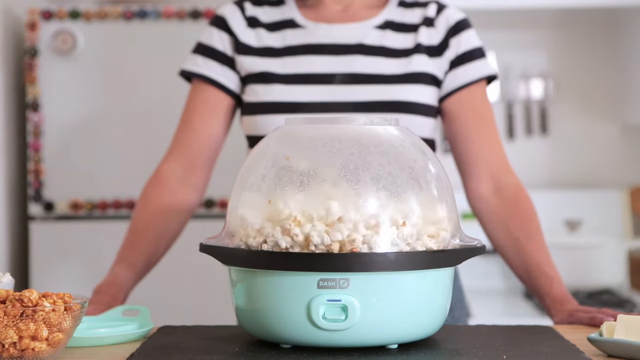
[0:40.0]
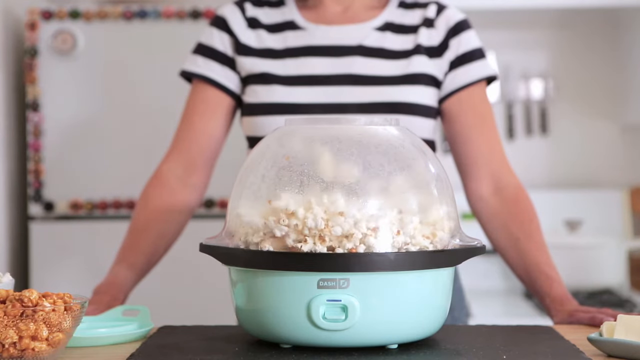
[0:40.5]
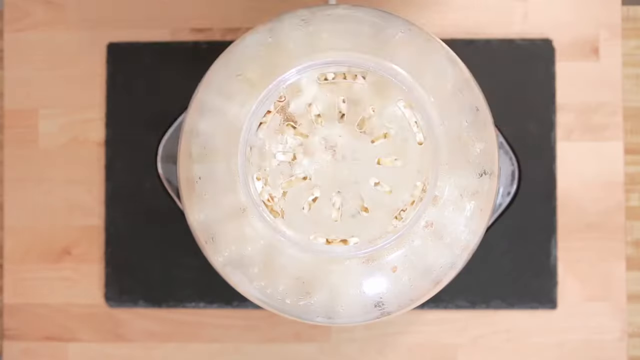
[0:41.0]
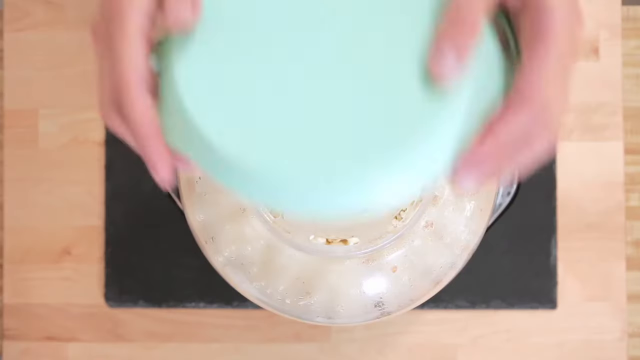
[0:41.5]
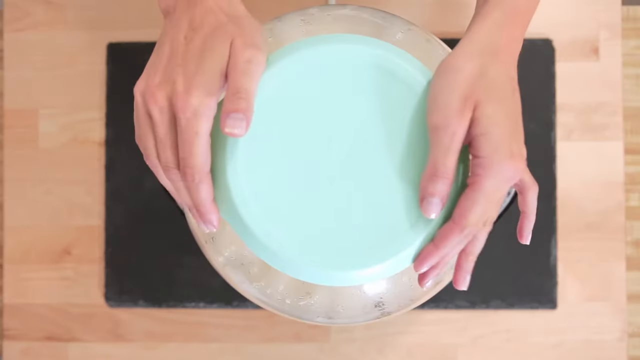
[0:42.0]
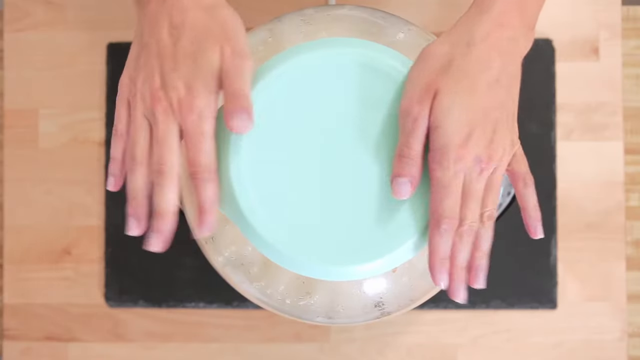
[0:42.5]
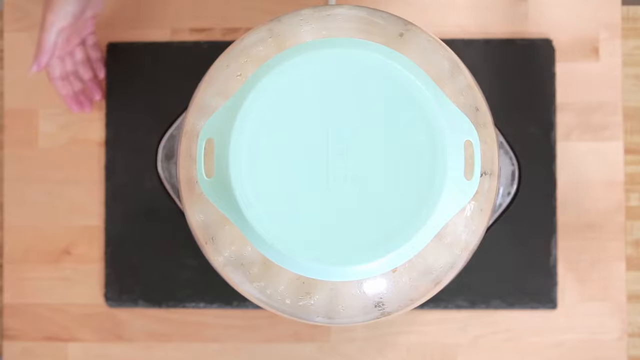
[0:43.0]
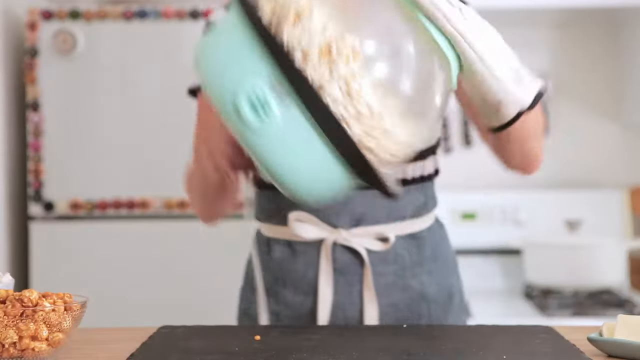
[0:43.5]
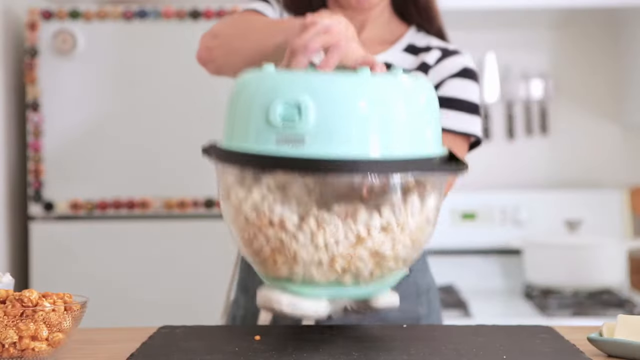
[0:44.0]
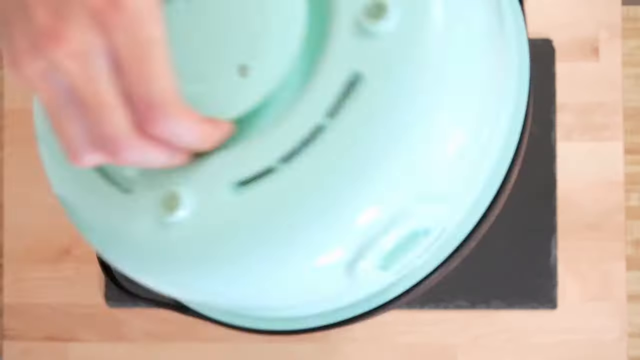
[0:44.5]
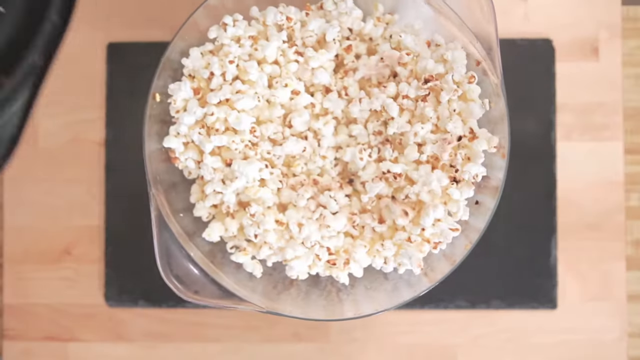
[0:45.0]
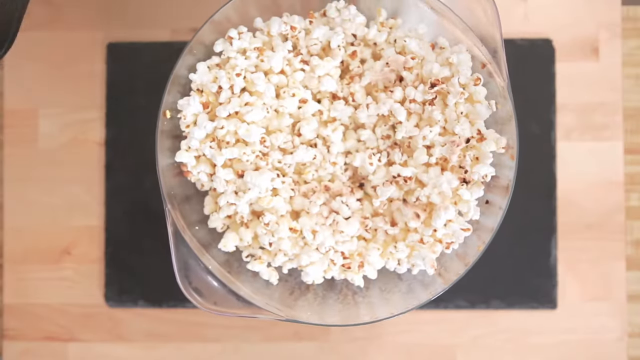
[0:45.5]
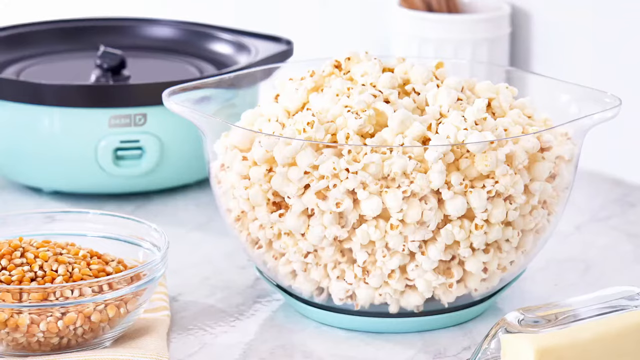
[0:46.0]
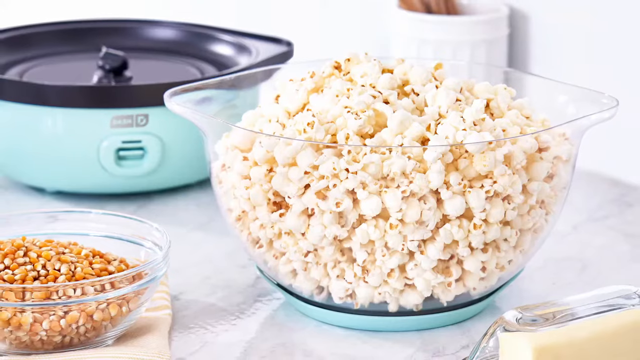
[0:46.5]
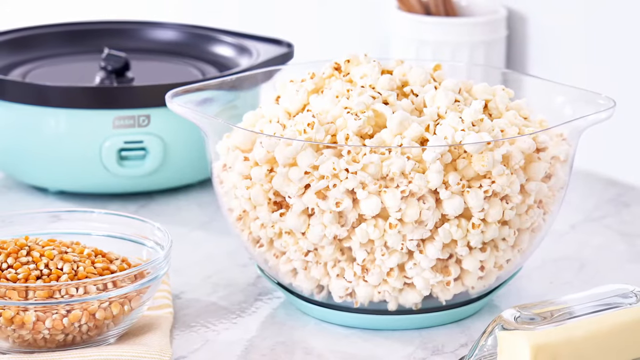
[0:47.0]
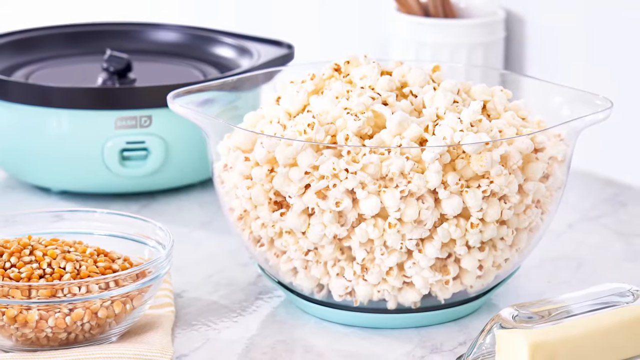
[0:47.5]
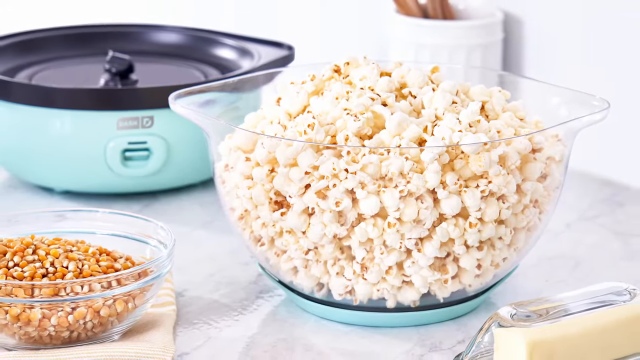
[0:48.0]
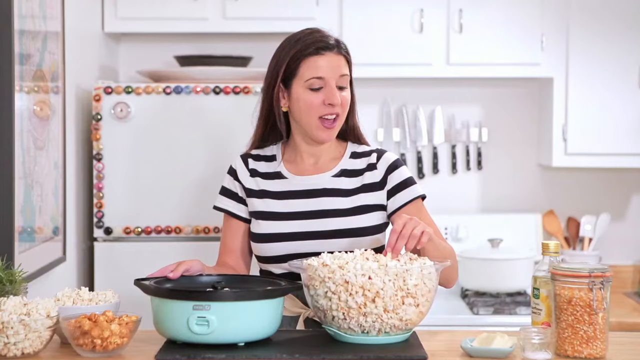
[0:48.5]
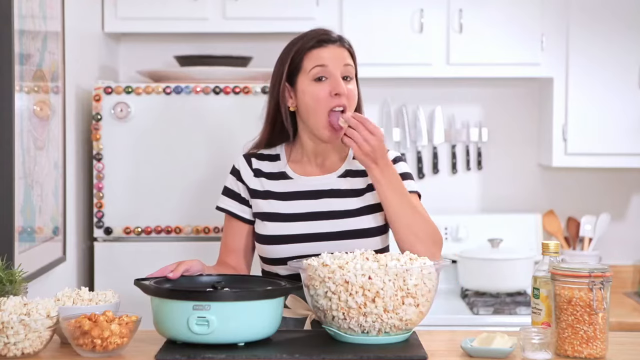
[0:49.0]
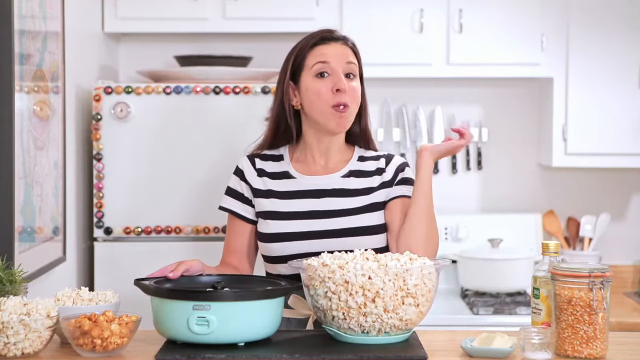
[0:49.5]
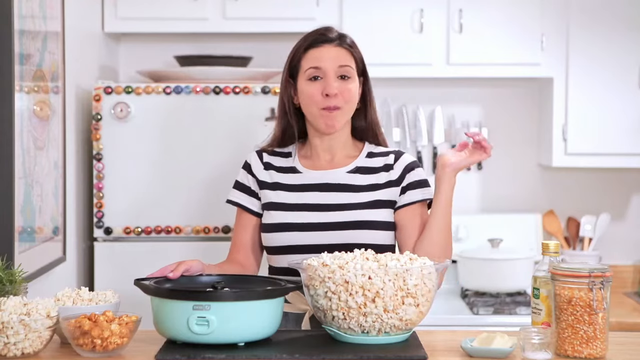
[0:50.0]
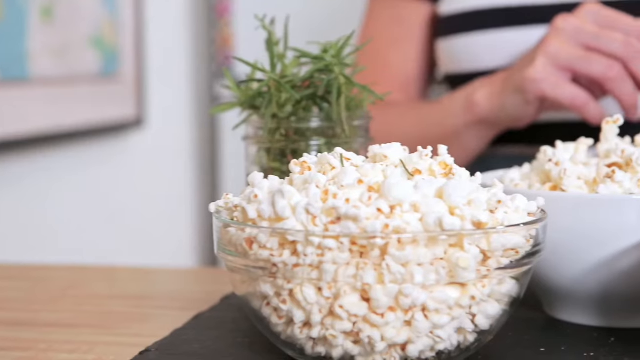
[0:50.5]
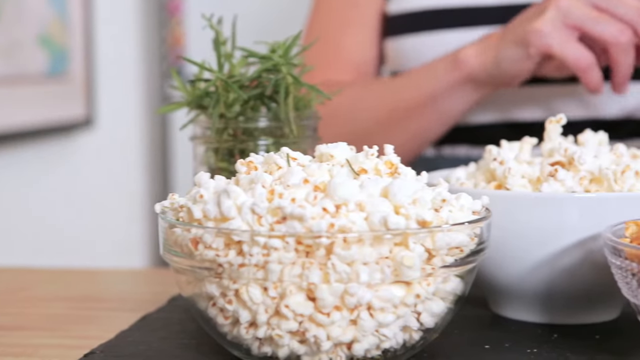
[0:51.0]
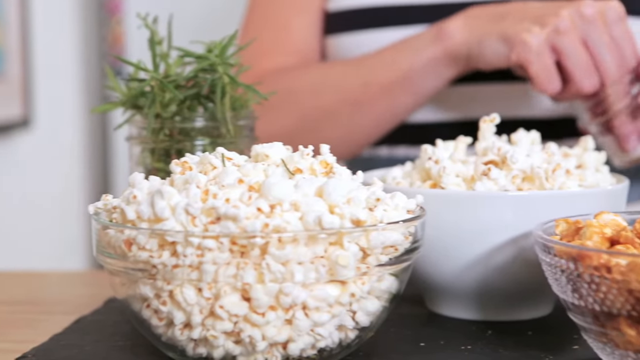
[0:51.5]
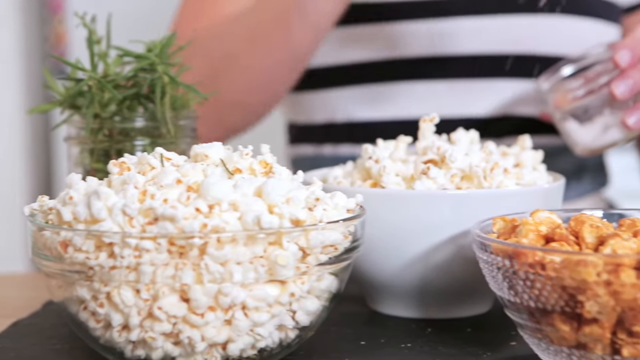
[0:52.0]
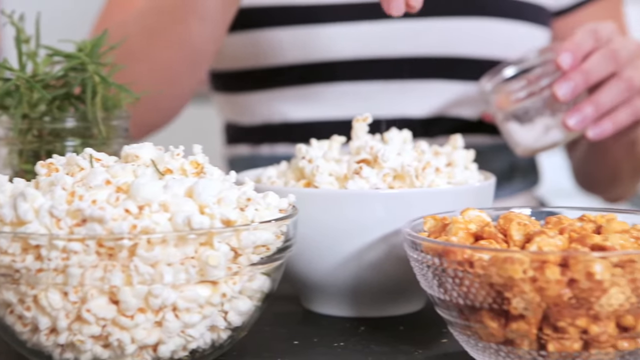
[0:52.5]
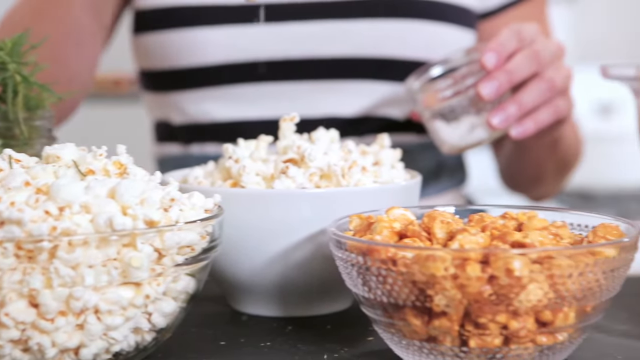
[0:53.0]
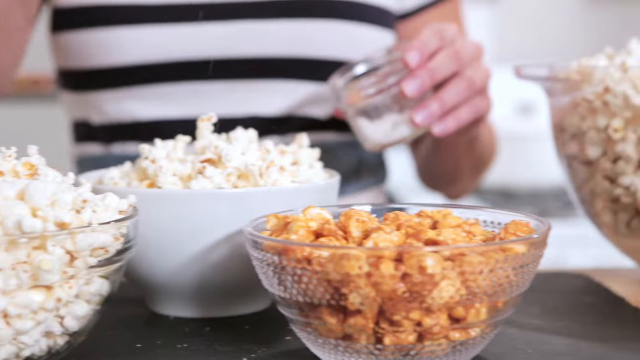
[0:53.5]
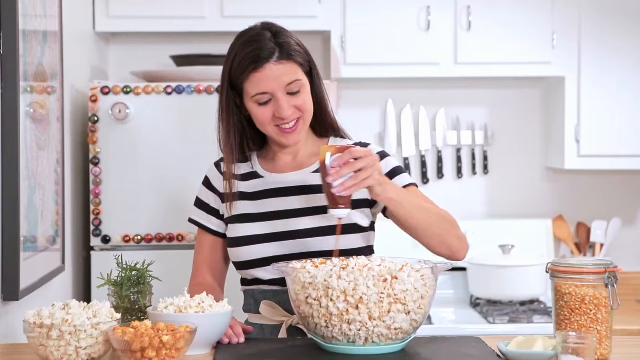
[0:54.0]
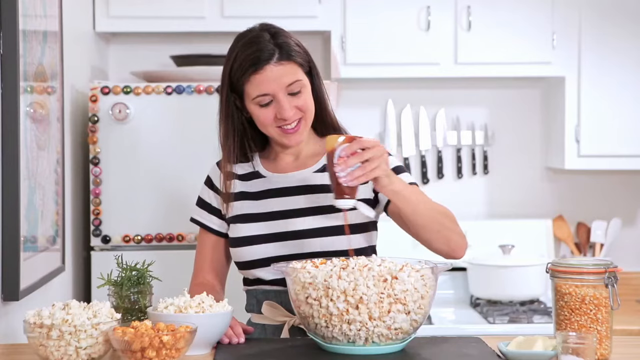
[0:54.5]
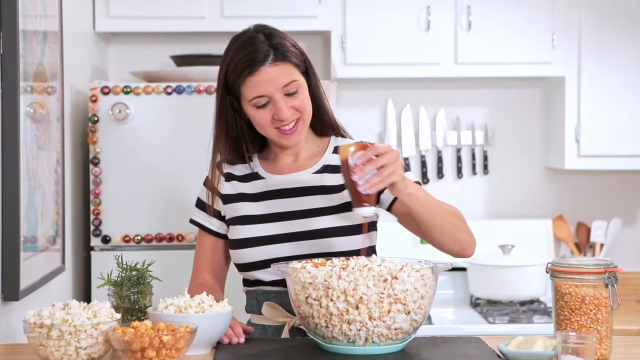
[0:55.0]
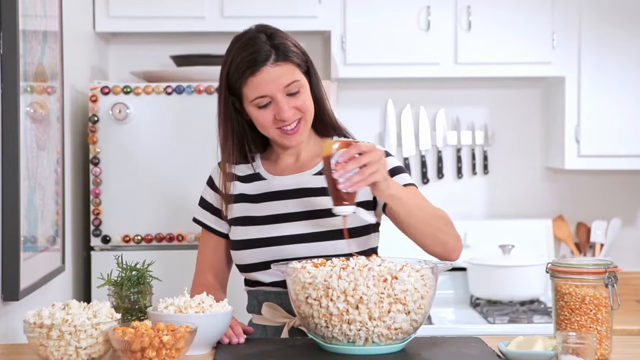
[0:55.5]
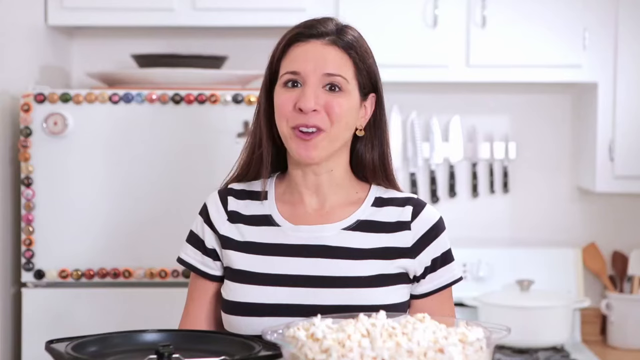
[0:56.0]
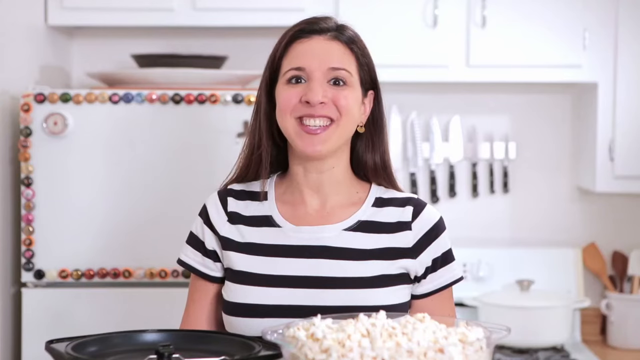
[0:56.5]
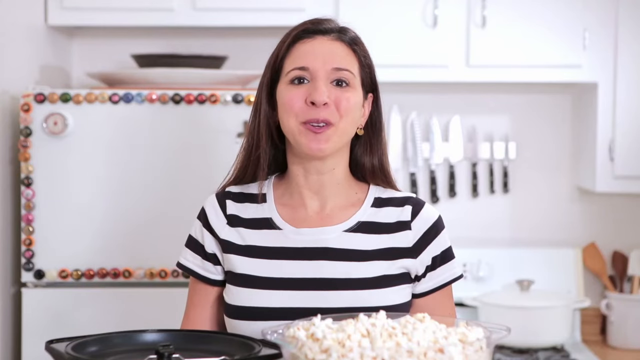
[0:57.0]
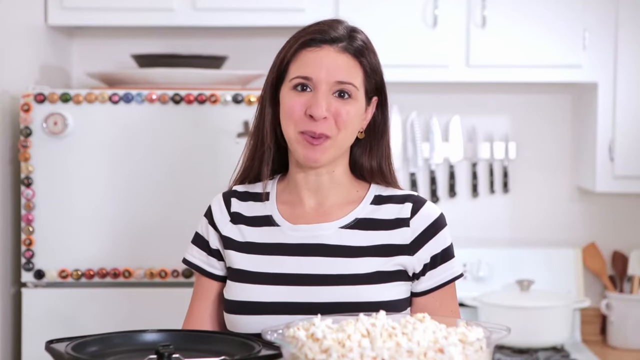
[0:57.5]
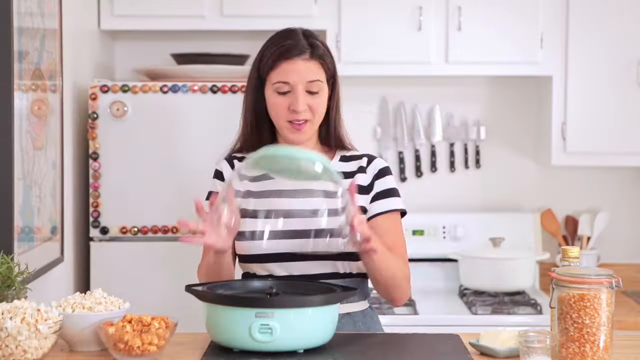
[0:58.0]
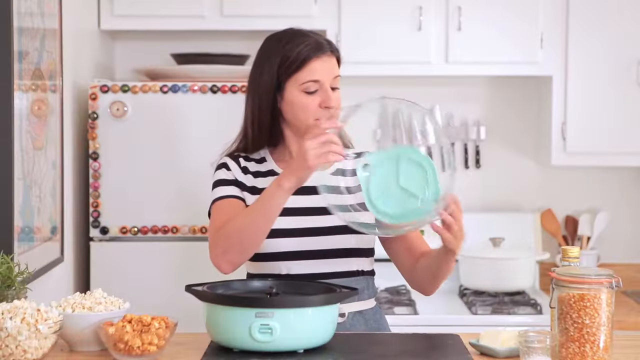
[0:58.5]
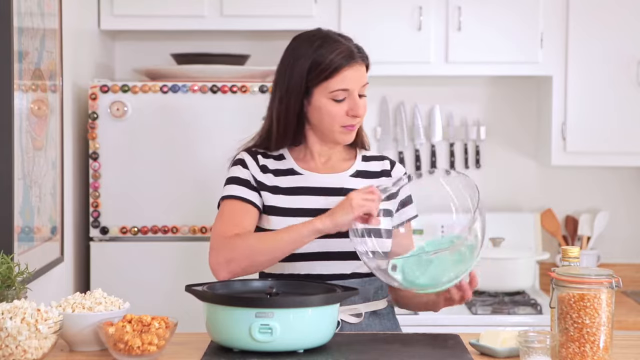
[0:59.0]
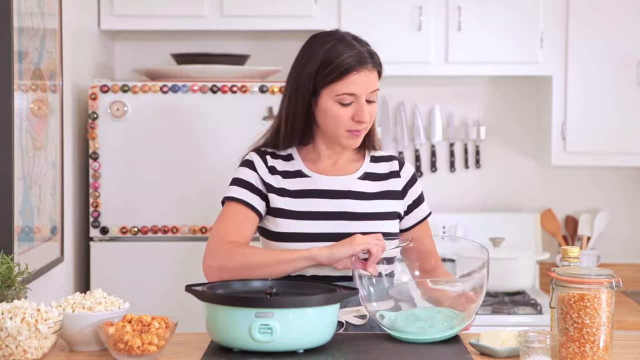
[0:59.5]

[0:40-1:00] The popcorn keeps popping until all the seeds have popped. The woman adds another small cube of butter to melt with the popcorn. She takes what looks like a small round lid, then flips the popcorn maker and opens it, and it looks like it turns into a bowl holding the popcorn. With the popcorn ready in the bowl, she takes out a portion and puts it in another white round bowl. She drizzles some syrup over the popcorn and seasons it with salt. She then takes a couple and eats them, apparently to taste the result.